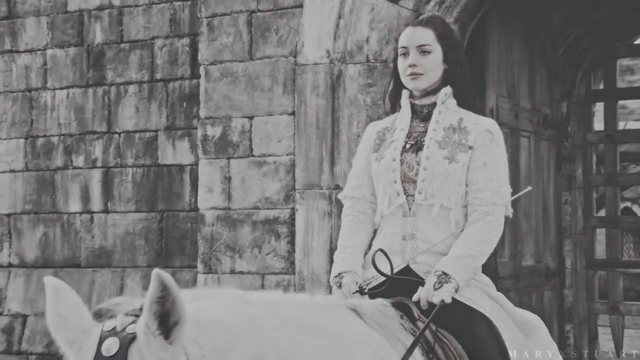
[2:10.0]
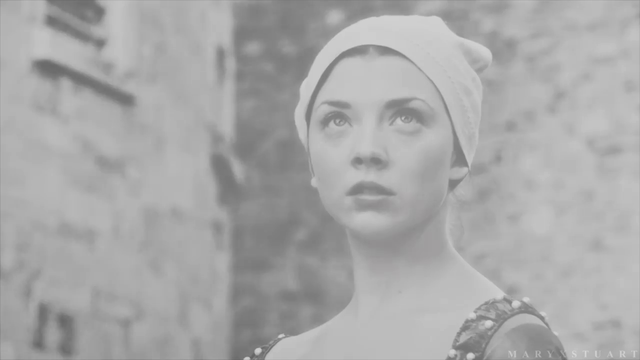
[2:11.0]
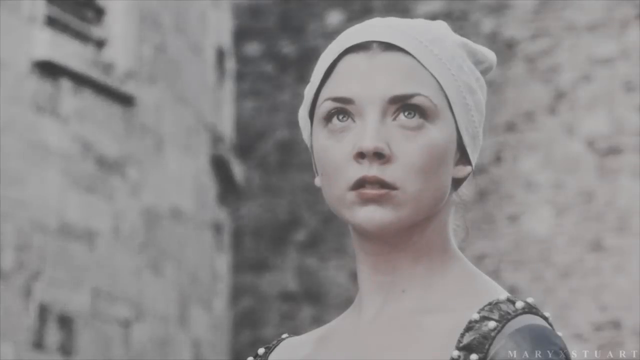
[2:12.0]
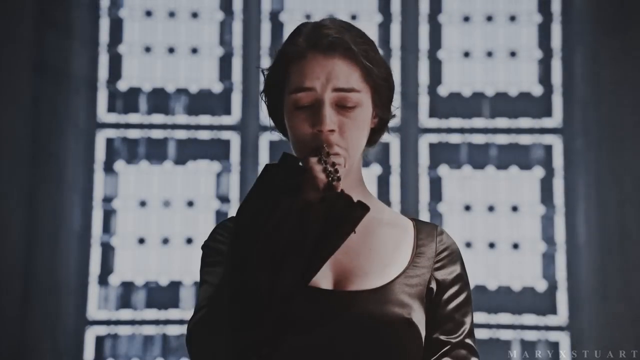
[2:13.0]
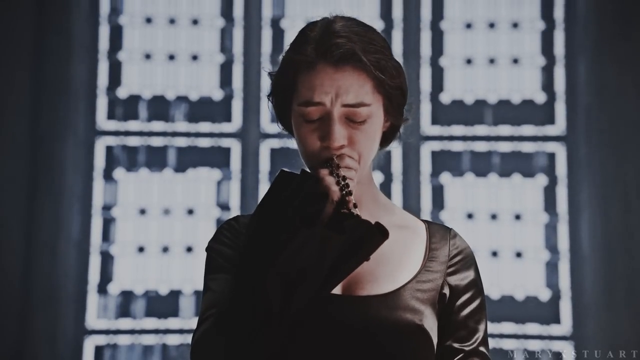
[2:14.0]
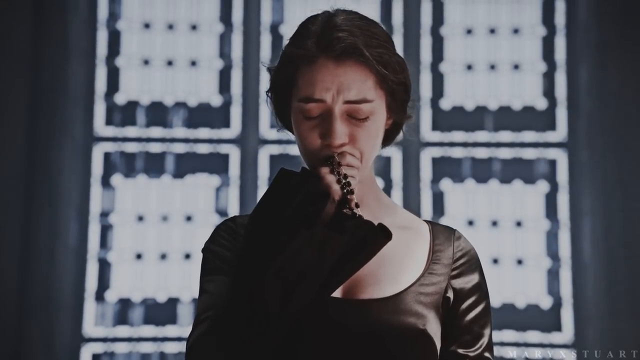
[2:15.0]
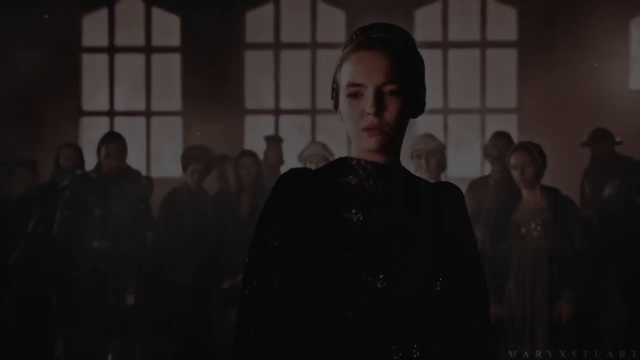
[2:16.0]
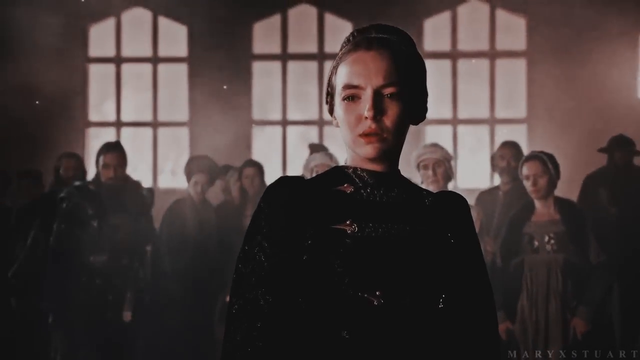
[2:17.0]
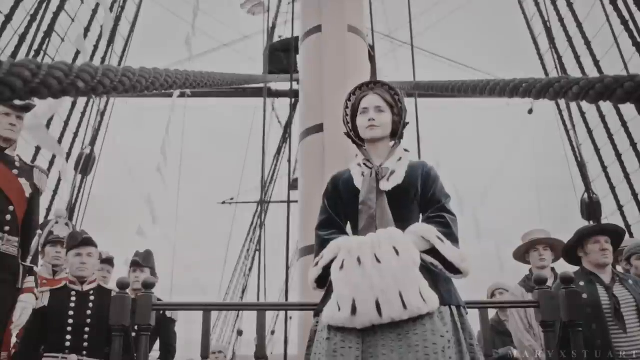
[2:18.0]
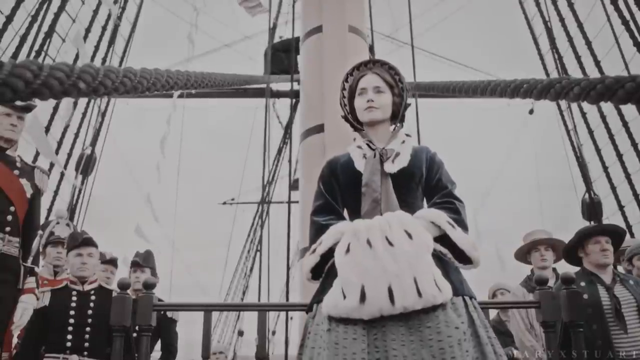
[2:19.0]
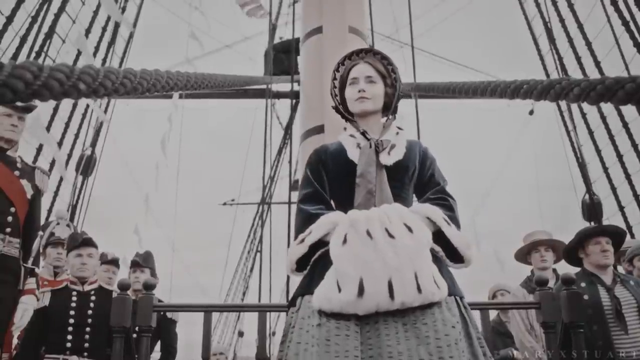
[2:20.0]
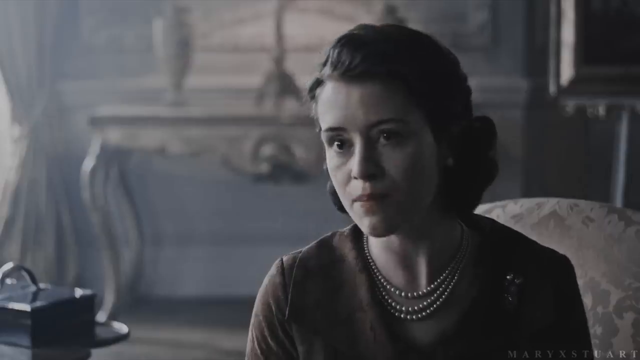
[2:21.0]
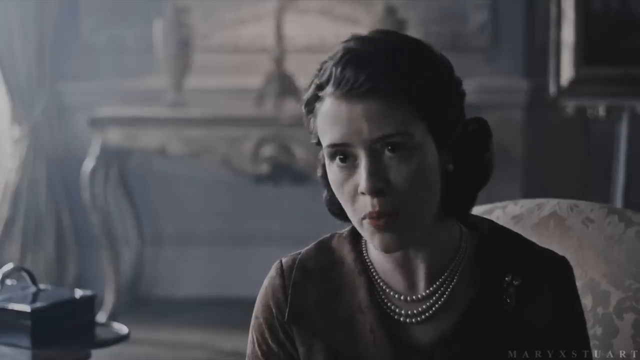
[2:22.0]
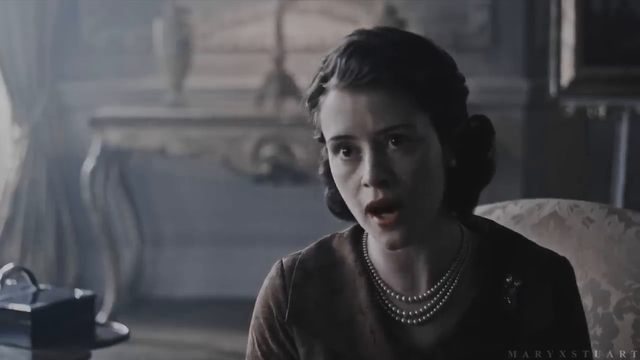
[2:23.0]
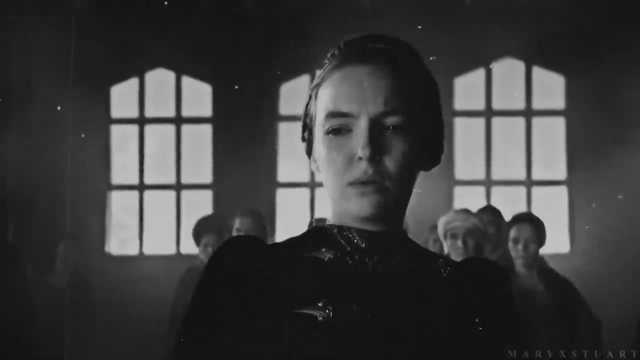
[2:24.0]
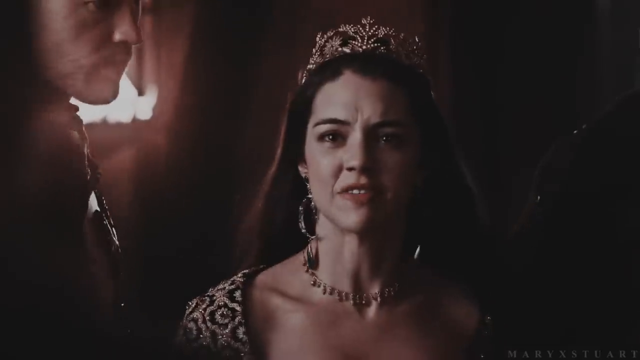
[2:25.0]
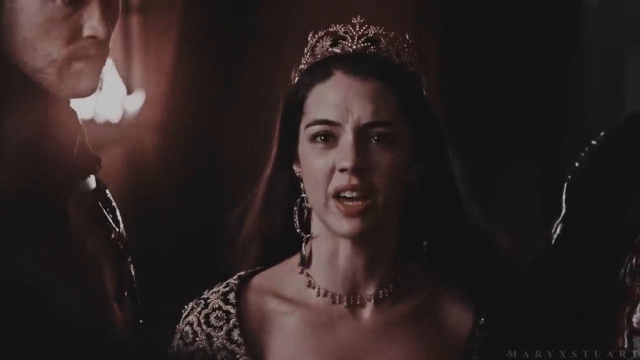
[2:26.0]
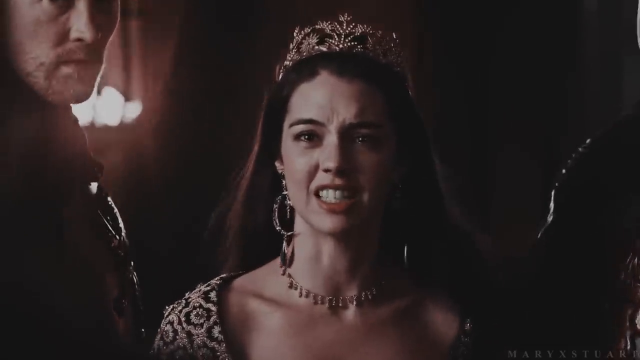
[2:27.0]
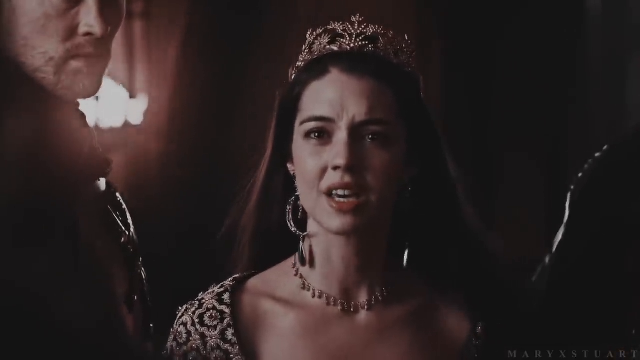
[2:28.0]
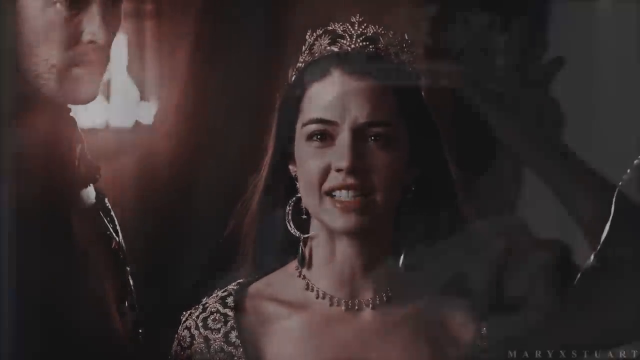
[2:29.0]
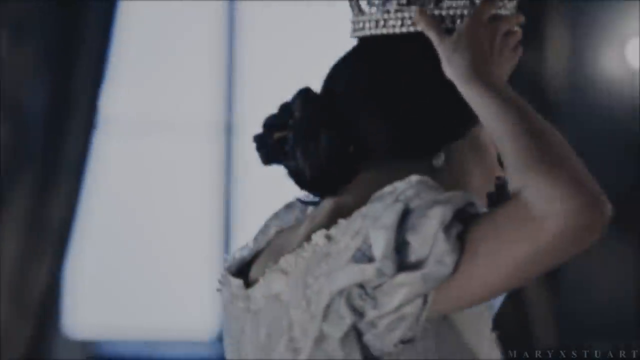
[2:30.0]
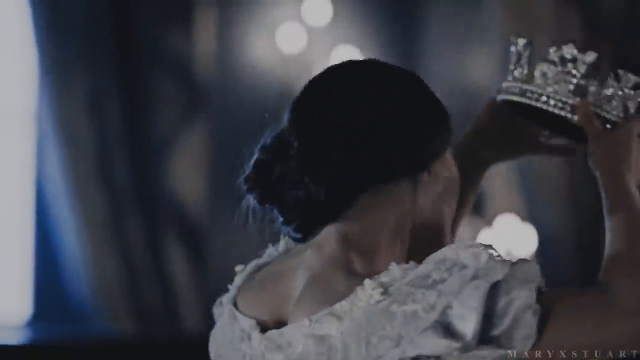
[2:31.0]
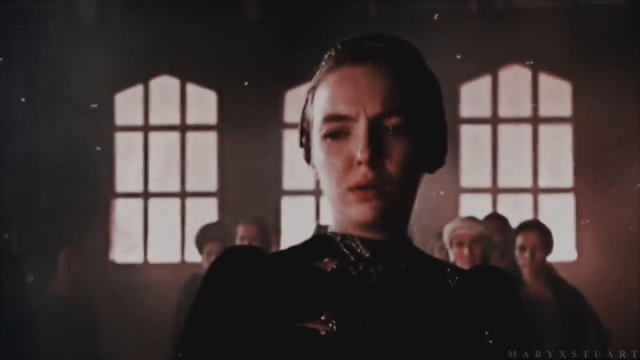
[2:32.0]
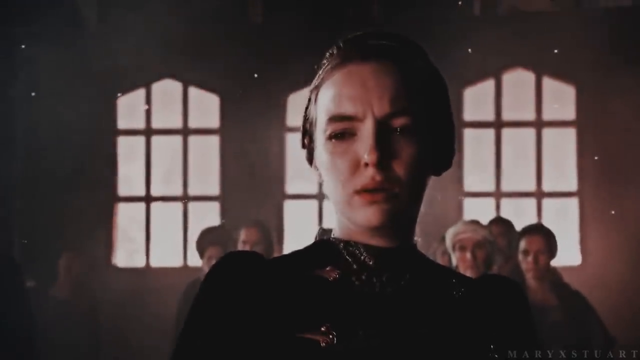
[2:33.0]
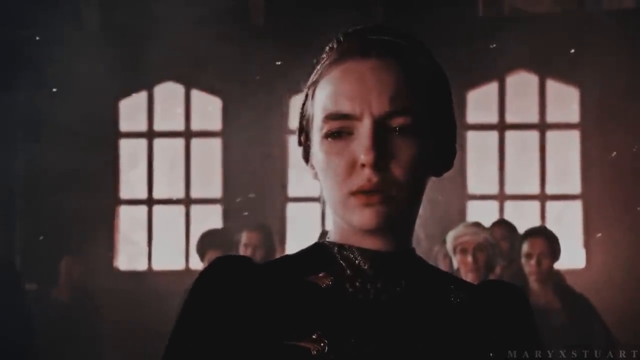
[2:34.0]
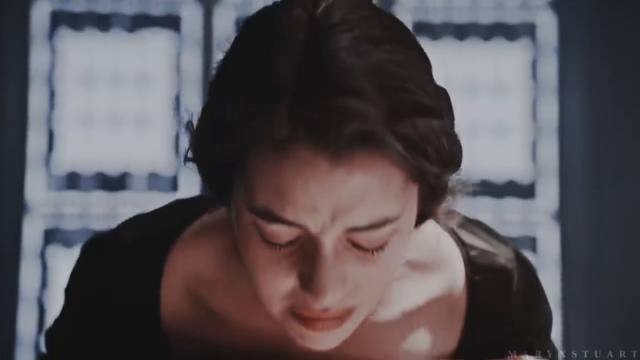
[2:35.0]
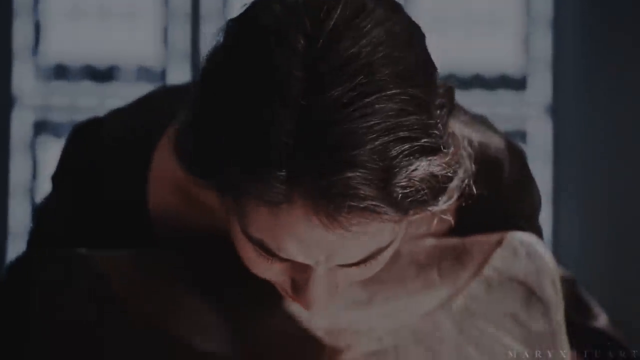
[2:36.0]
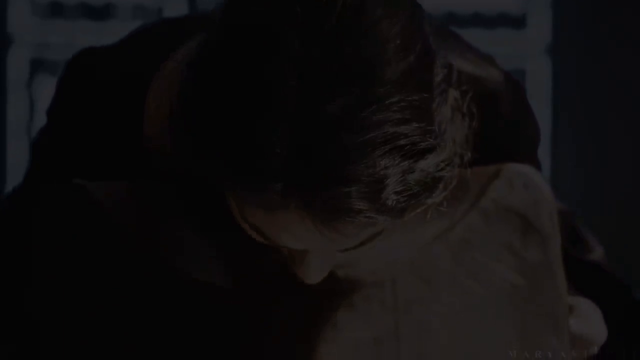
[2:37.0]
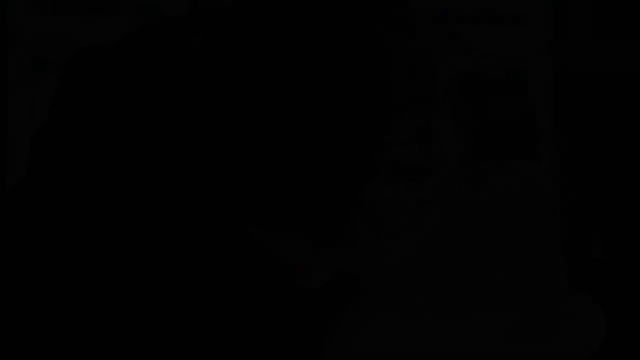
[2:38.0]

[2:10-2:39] A black-and-white picture shows a woman on the right side of the wide-format frame, facing somewhere around the 6:30 direction. She wears a decorative long-sleeve vest with a very stiff-looking collar that comes up, and seems to have some sort of black undershirt under it; the vest is unbuttoned all the way down to around her belly button. She is white, with long hair that is black or brown. She rides a light-colored horse in that direction. Behind her is what looks like a castle, with a barred gate on the right side, a big arch rising higher than the frame, and a lot of stone. The video then moves to a very young woman, maybe about 18, wearing a white do-rag, seen from the neck up, with a very long, thin neck. Her body faces the lower right, while her head is tilted left toward the camera, and her eyes are about hazel in color.